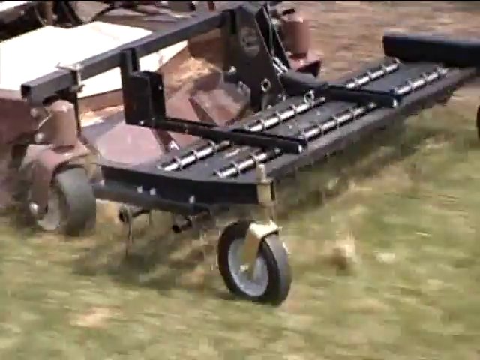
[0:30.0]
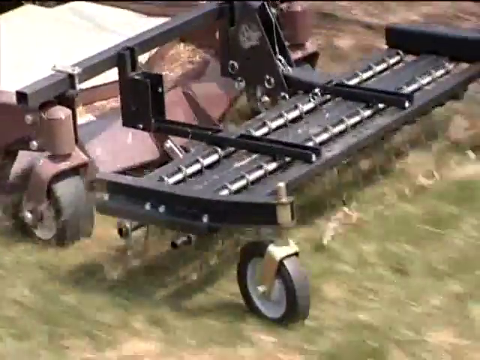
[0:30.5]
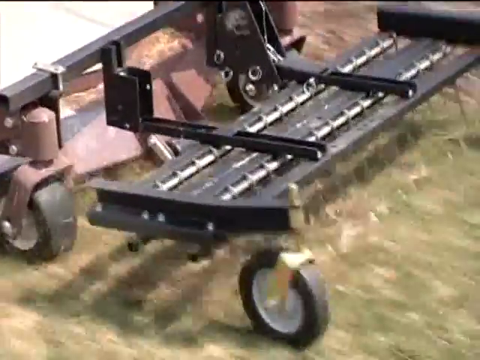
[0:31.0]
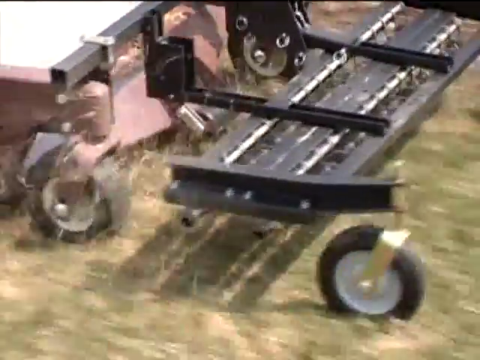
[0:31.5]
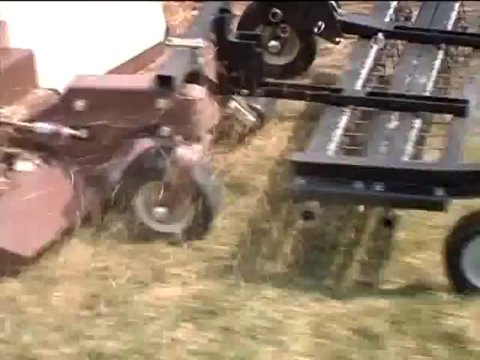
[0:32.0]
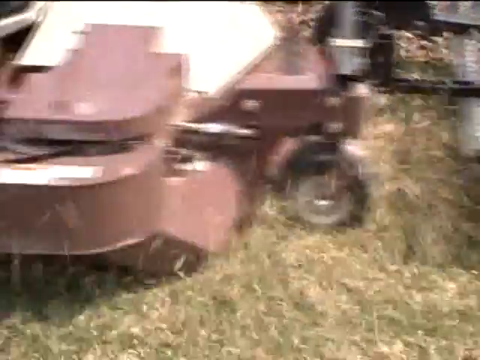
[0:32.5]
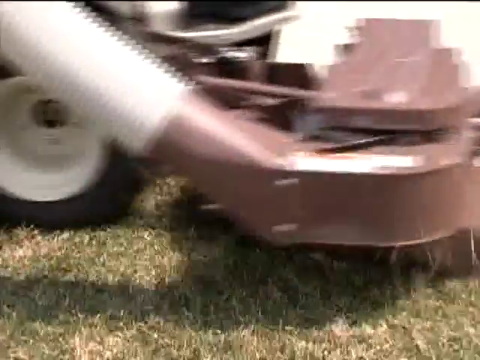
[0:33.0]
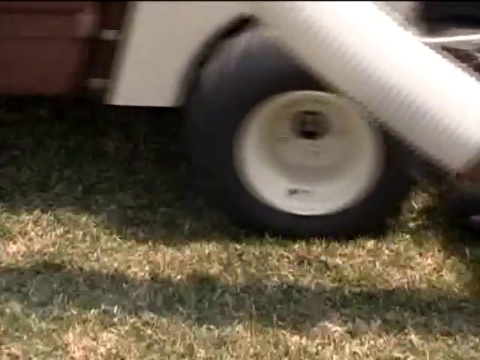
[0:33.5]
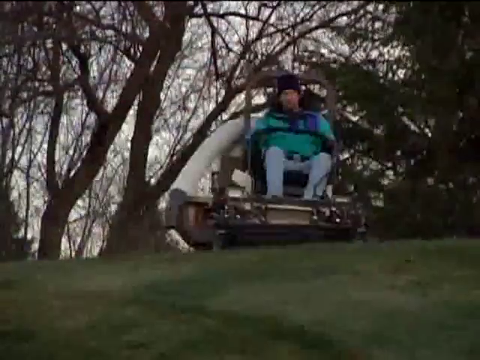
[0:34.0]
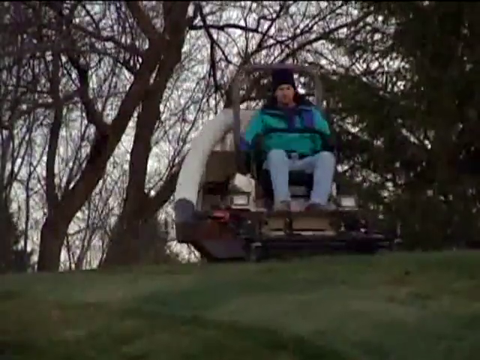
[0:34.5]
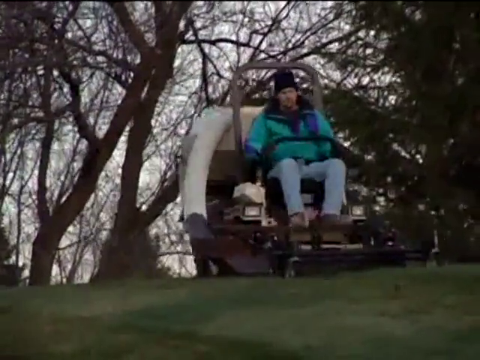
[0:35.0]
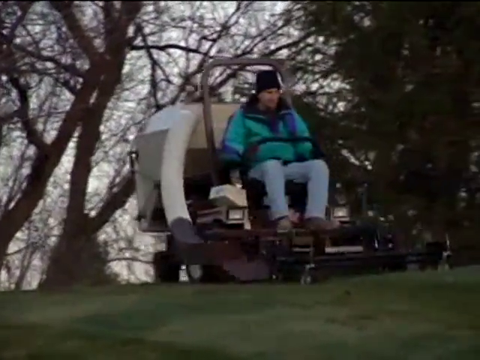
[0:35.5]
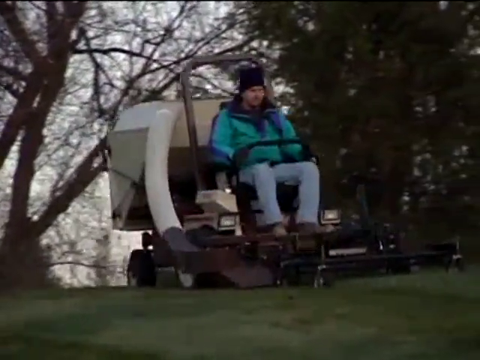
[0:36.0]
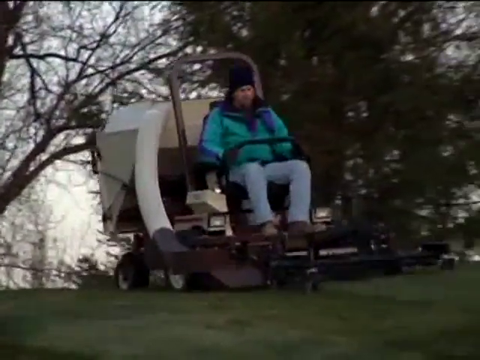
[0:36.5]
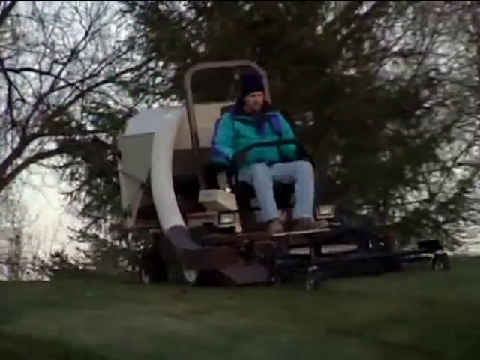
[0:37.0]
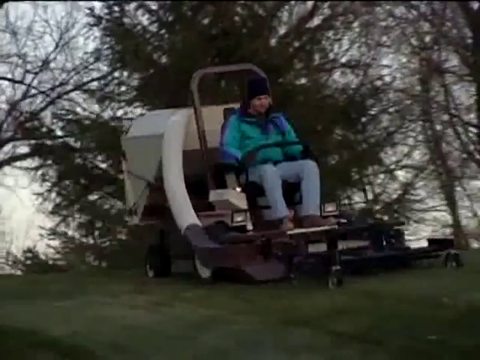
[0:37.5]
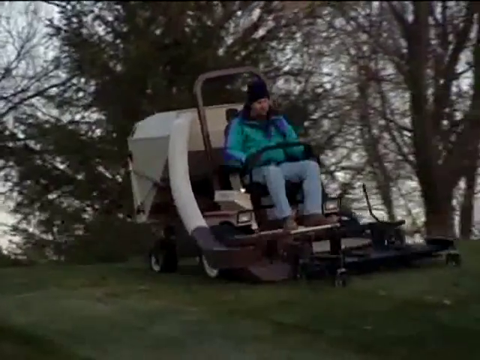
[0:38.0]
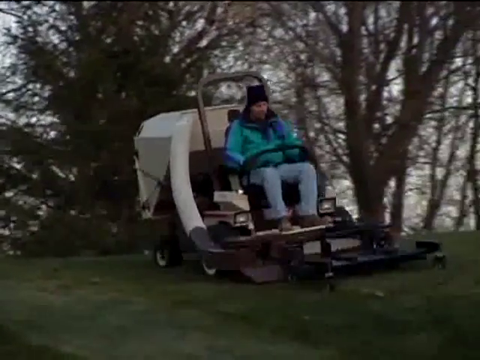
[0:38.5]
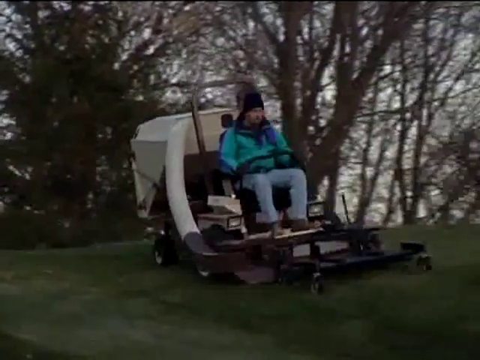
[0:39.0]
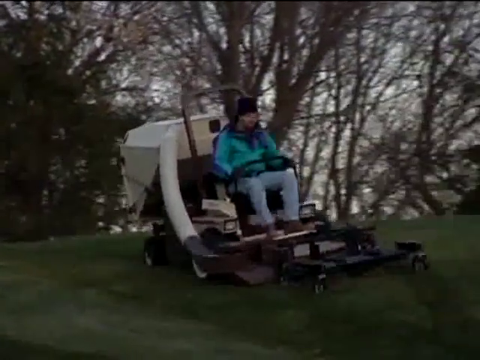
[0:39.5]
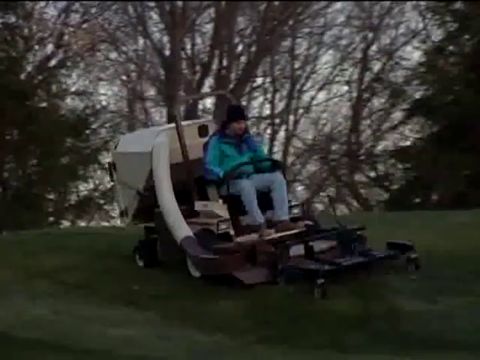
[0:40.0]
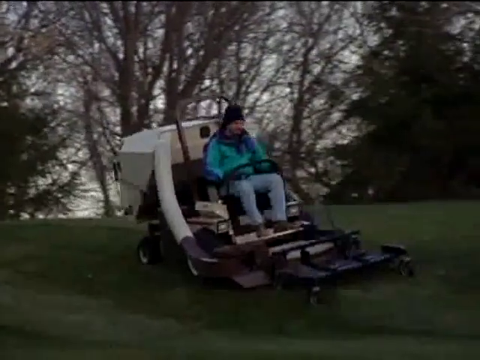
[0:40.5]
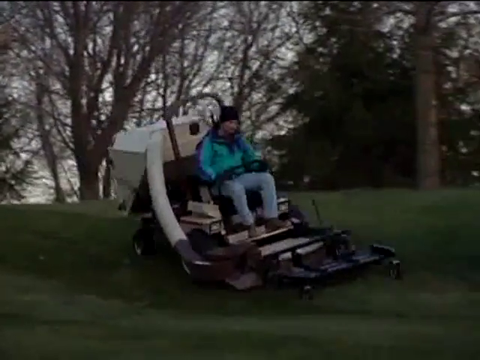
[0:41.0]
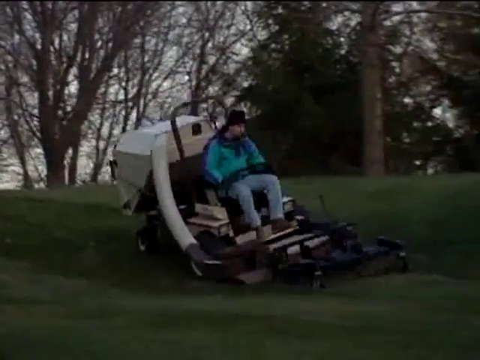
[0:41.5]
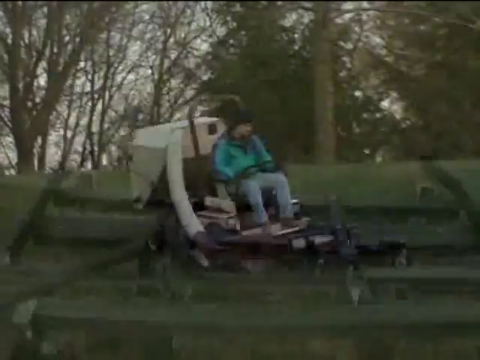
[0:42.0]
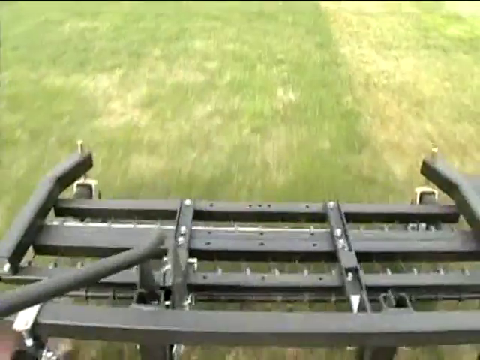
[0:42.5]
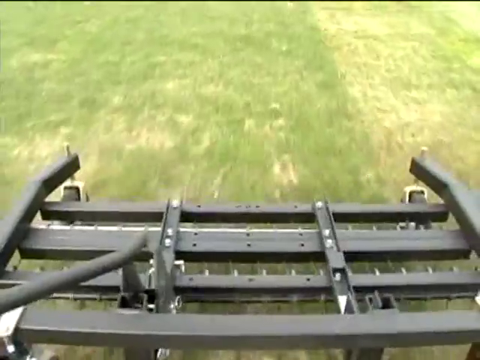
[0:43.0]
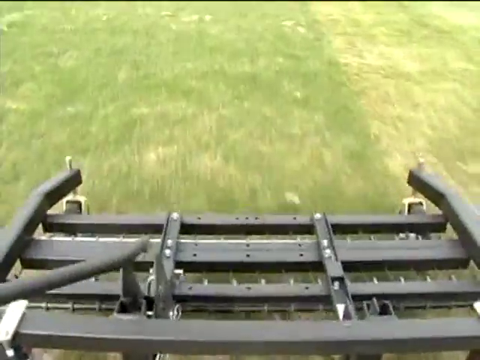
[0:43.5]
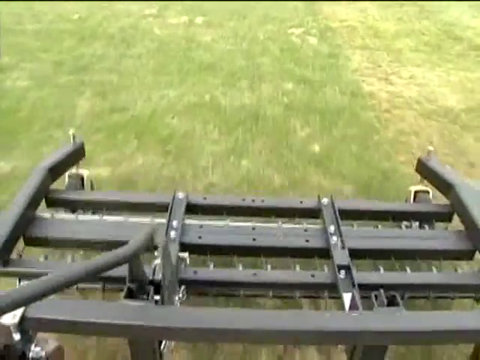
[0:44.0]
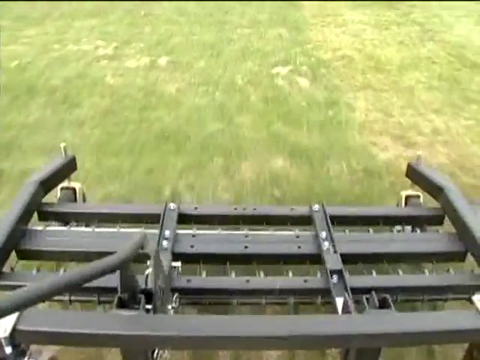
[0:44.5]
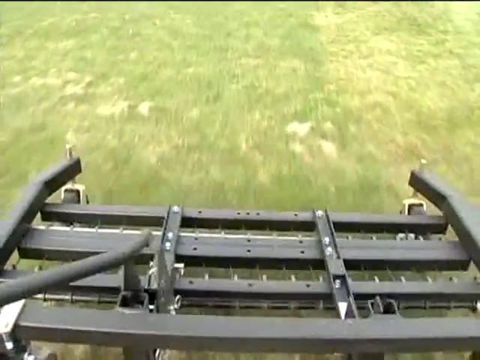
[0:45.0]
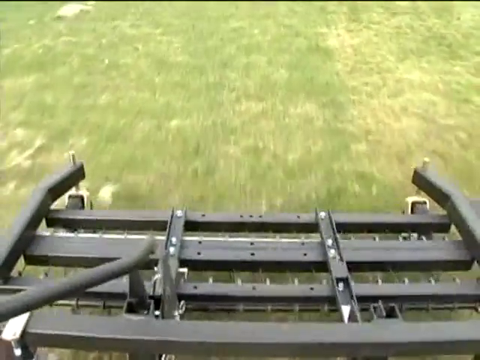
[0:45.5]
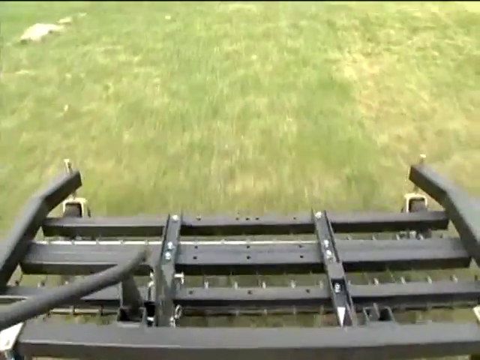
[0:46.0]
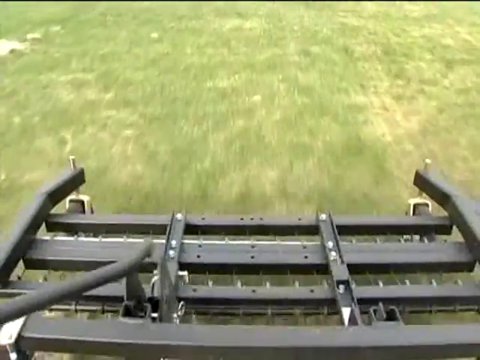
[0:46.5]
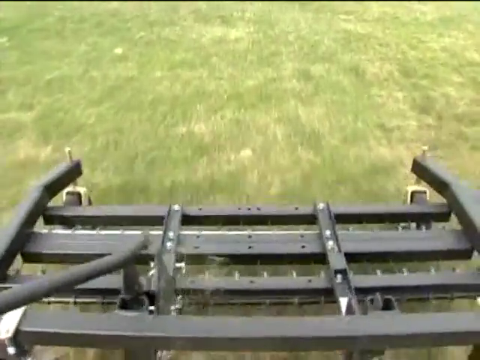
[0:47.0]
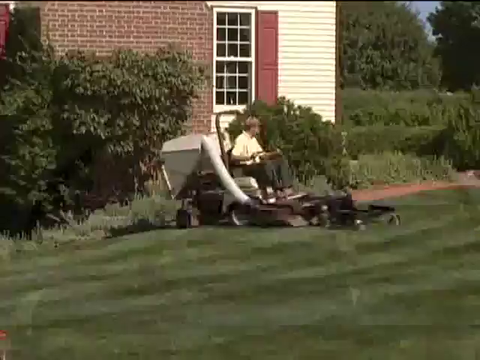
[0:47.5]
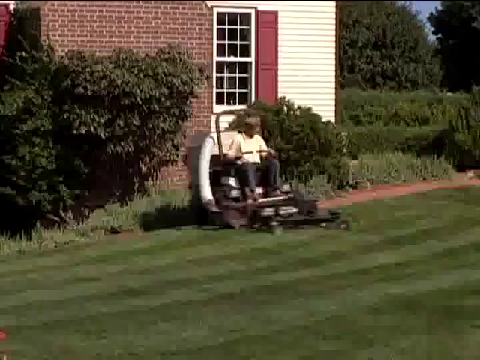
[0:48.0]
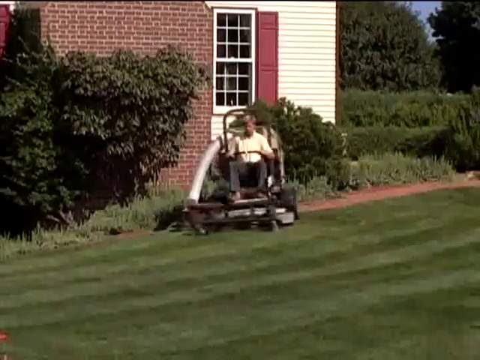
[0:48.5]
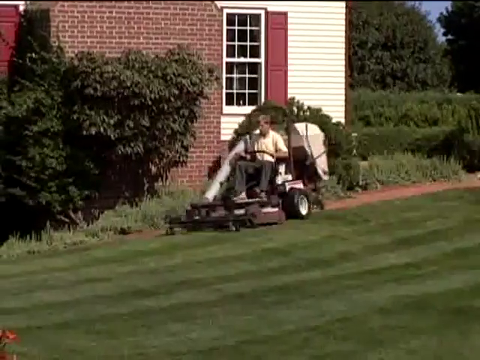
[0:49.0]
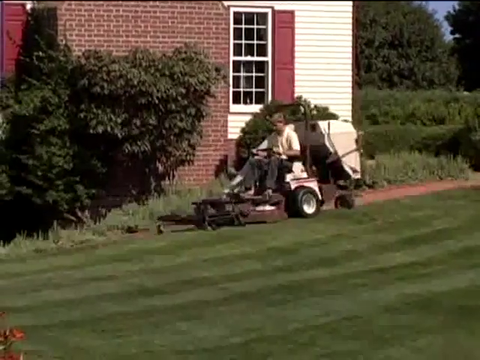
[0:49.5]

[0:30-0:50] The front tool of the machine, a dethatcher connected to the lawnmower, is shown. It has a black frame with two wheels on the front and is mounted on the lawnmower's front. The lawnmower is brown, and as it operates the dethatcher on the front removes dead grass. A different person rides a lawnmower that has a huge white tank on its rear. The pipe on the right side of the lawnmower connects to the tank and probably picks up the removed thatch from the ground. A person is seen operating on grass on an uneven surface.